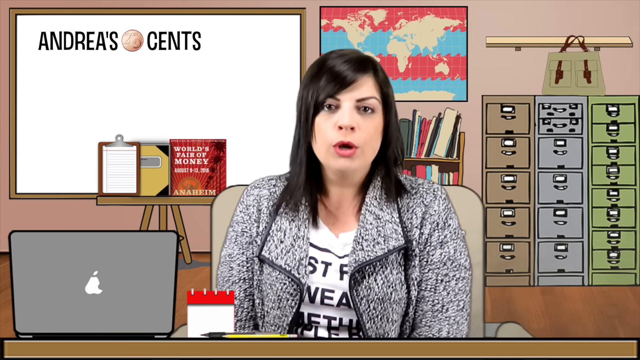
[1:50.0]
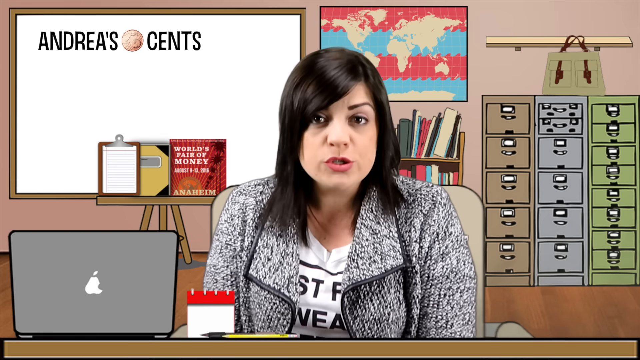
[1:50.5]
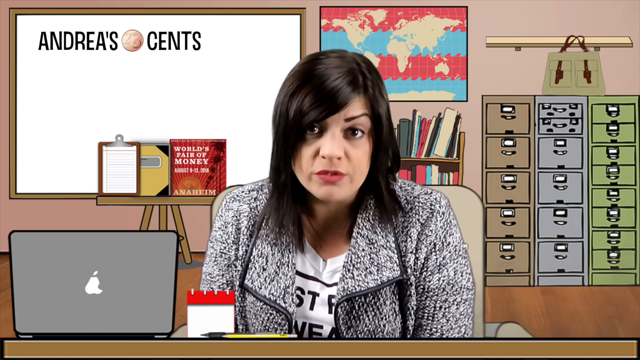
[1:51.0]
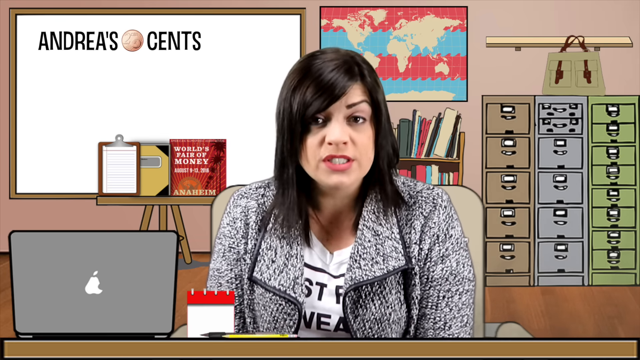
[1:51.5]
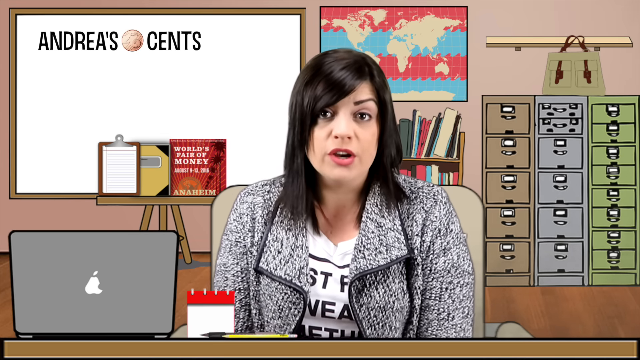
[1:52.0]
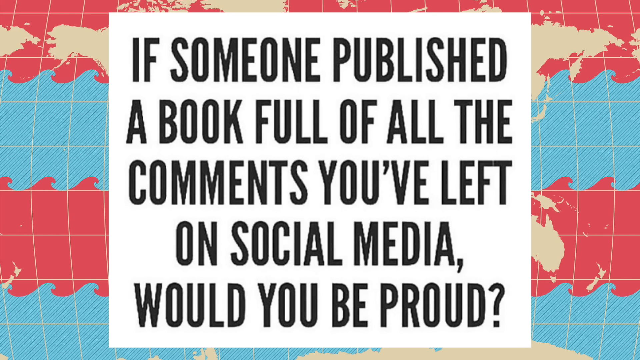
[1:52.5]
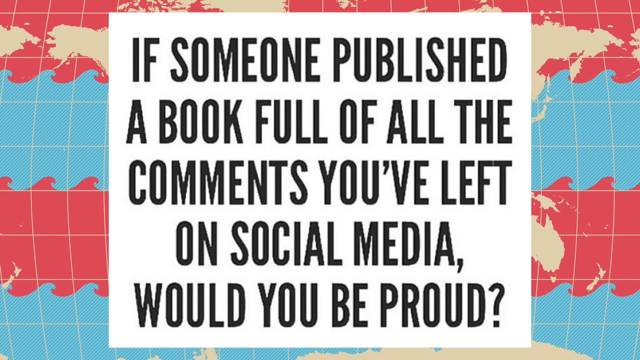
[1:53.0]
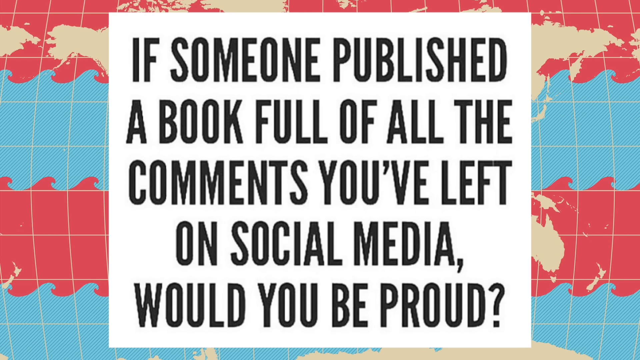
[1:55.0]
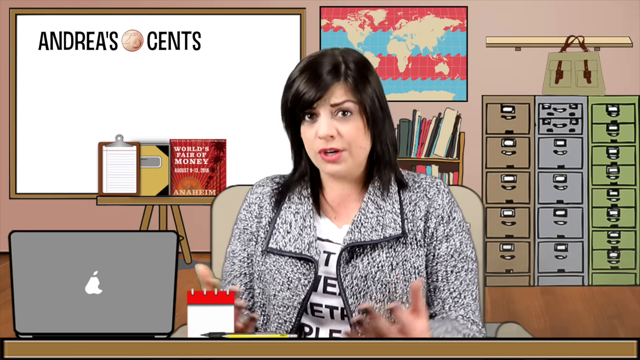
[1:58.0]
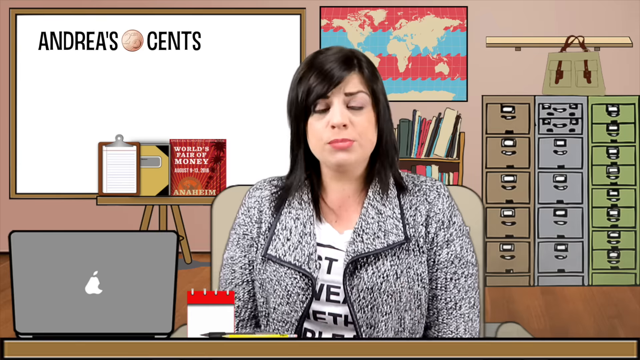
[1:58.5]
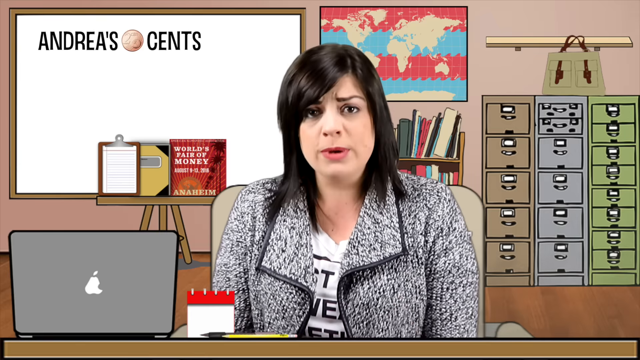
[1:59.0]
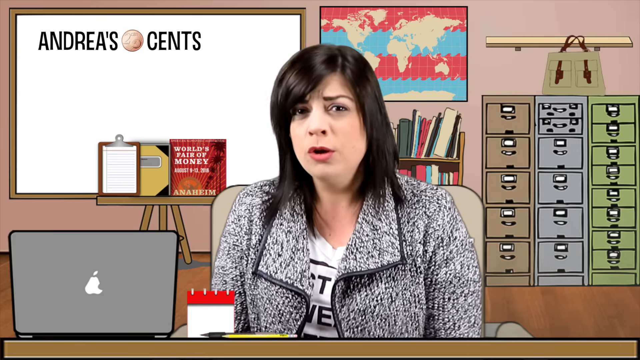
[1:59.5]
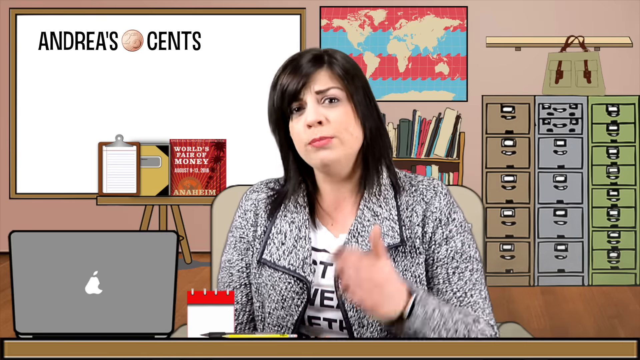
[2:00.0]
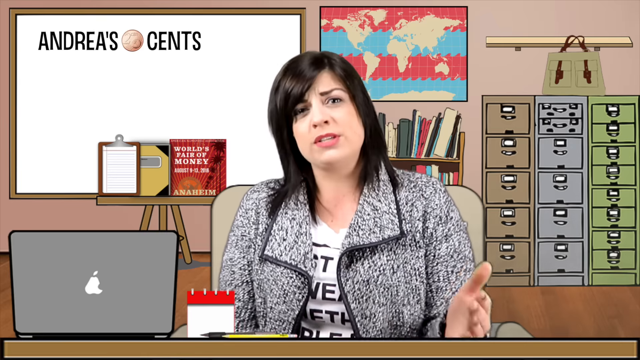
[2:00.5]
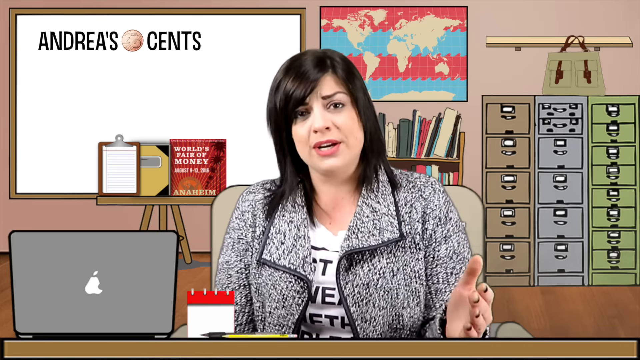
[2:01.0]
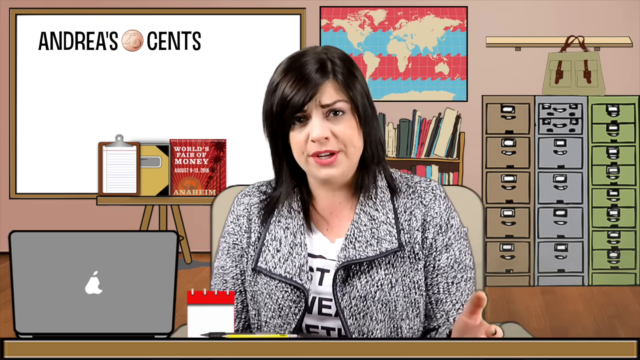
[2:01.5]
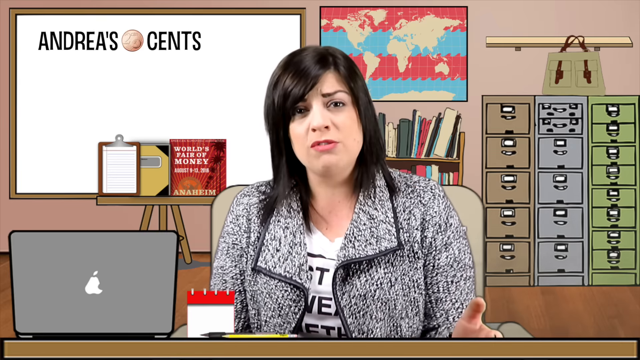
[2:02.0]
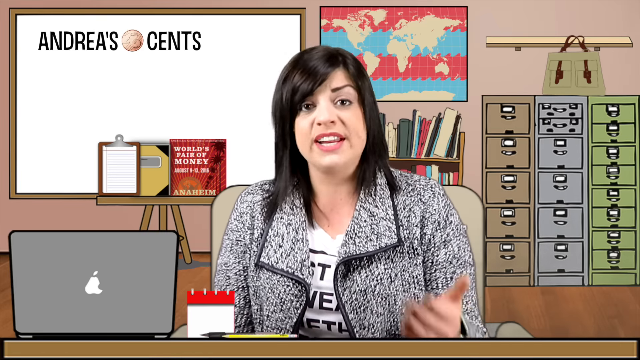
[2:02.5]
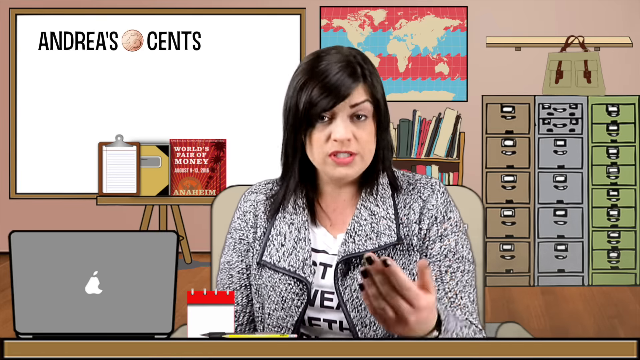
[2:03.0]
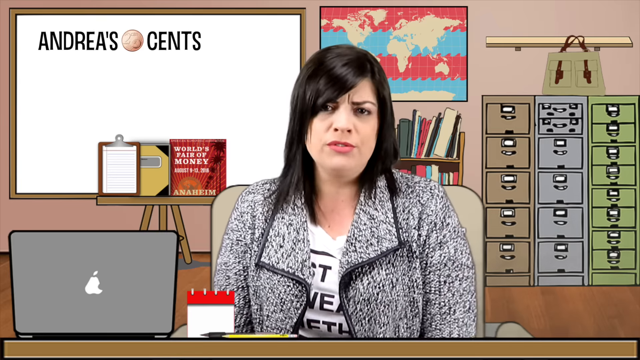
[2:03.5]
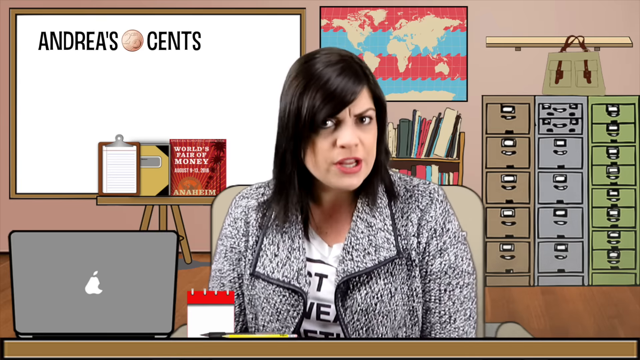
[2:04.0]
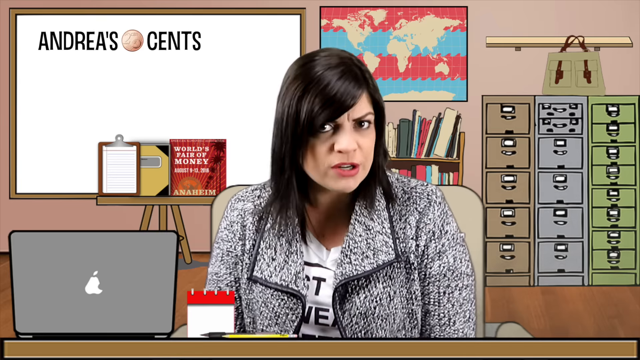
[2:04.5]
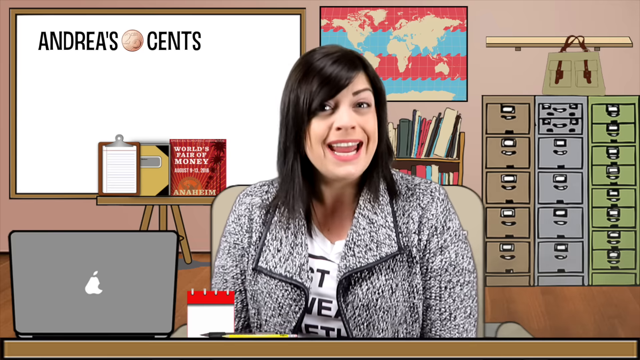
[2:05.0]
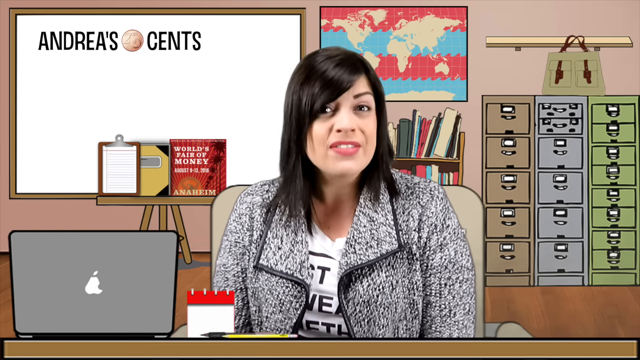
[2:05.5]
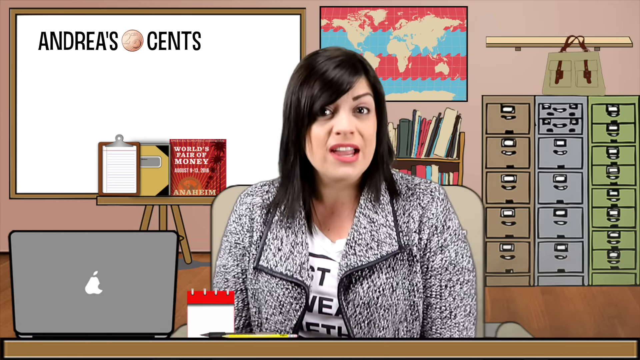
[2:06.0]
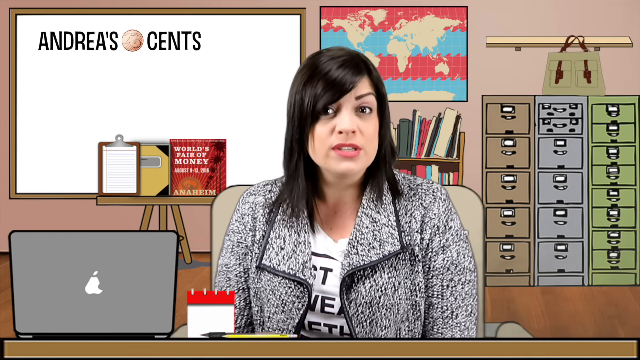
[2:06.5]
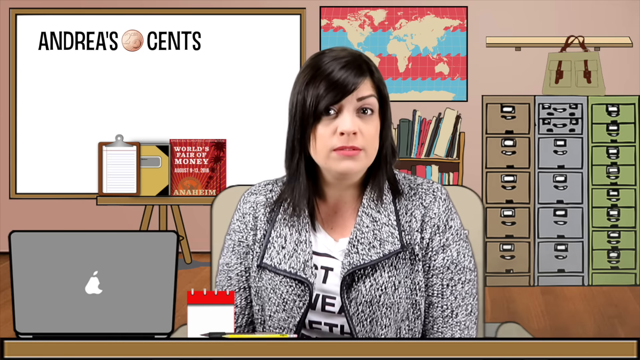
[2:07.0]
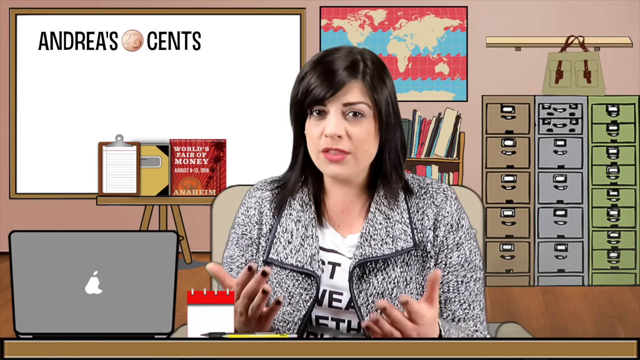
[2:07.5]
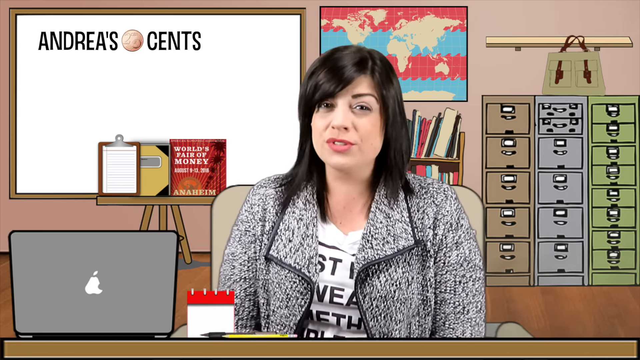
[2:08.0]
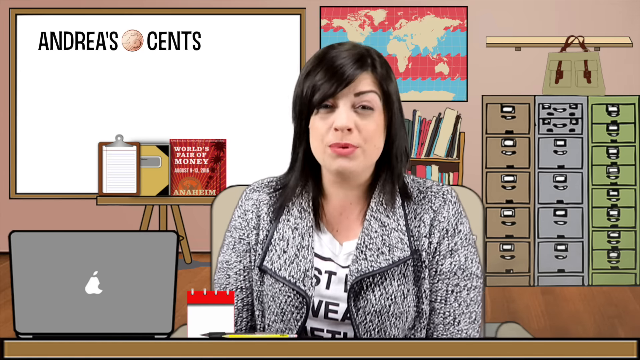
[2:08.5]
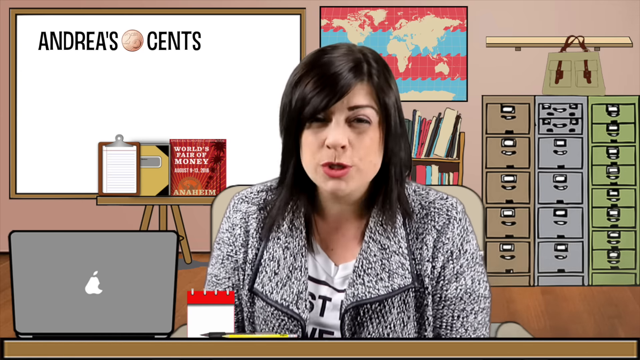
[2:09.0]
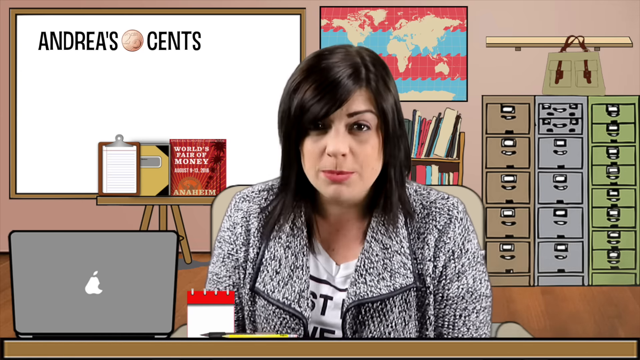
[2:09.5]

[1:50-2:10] Andrea is still talking to the viewer, and another quote is shown on a white background, written in black: "if someone published a book full of the comments you have left on social media, would you be proud?" The scene switches to Andrea still gesturing with her hand. A black watch is slightly visible on her left arm. The background is solid and nothing moves in it; only she and her outline are there, since she is cut out of the real background and placed on an animated one. She has black hair and wears a grey coat with black outlines on the edges and a white t-shirt with black writing on the chest, which is not visible because the coat covers it. The floor in her background is brown wood.